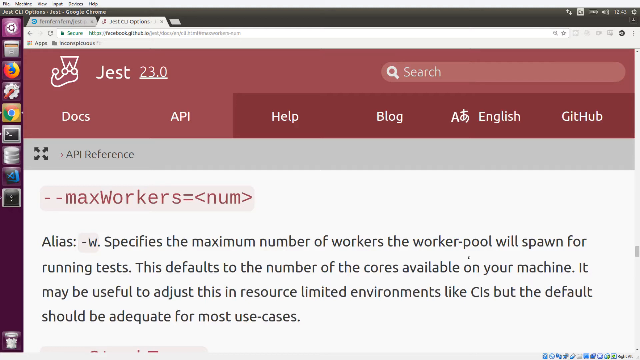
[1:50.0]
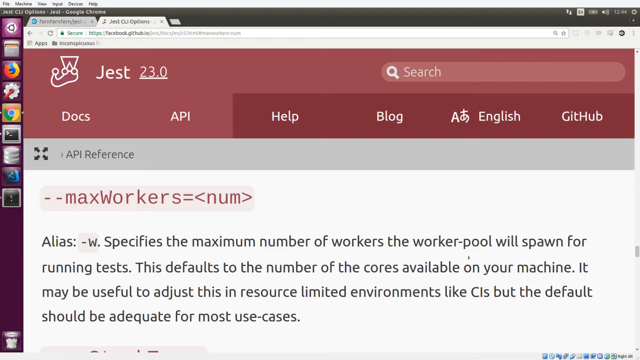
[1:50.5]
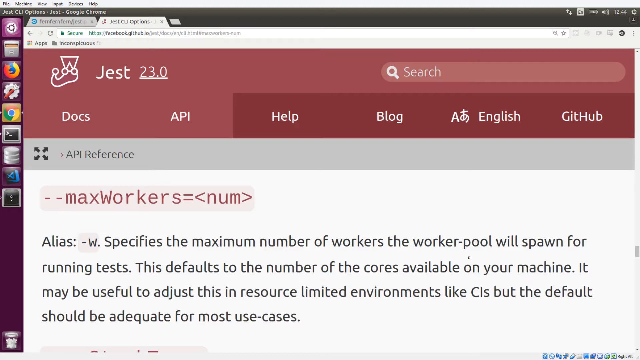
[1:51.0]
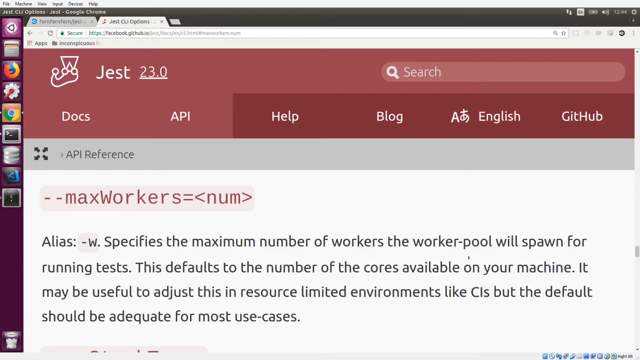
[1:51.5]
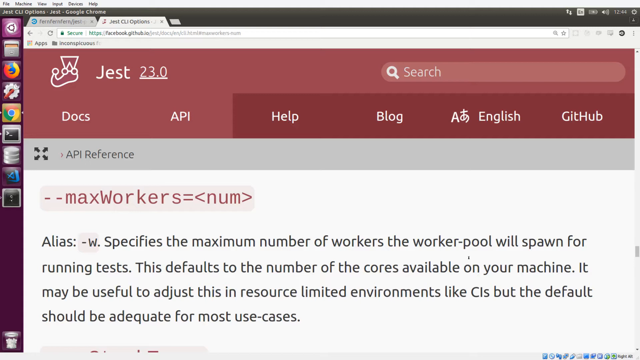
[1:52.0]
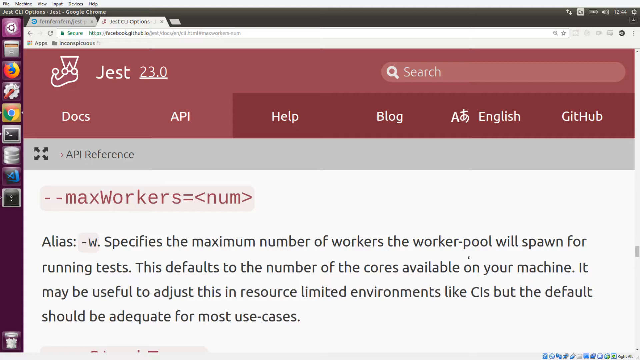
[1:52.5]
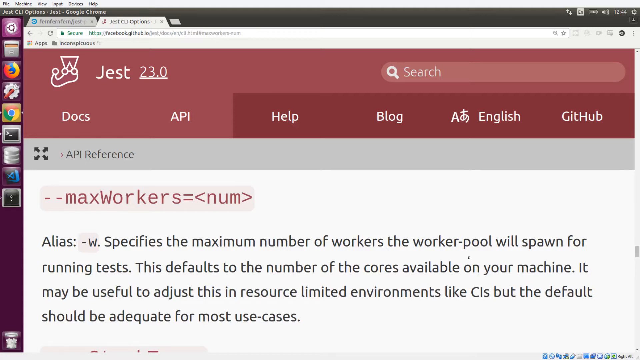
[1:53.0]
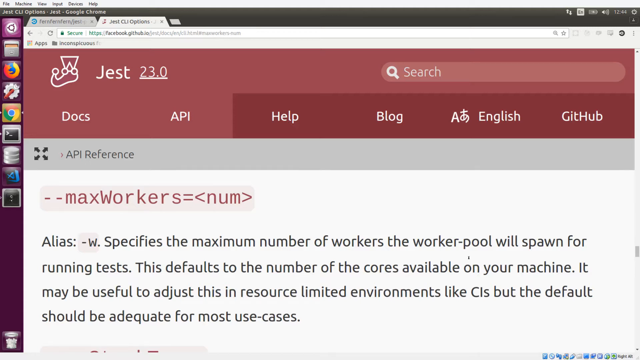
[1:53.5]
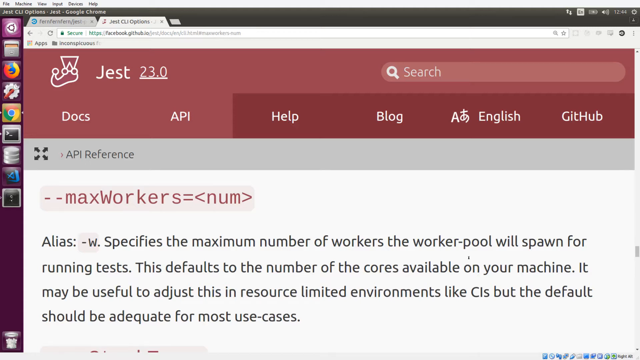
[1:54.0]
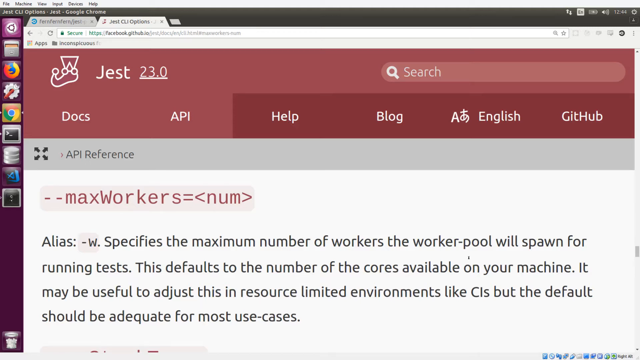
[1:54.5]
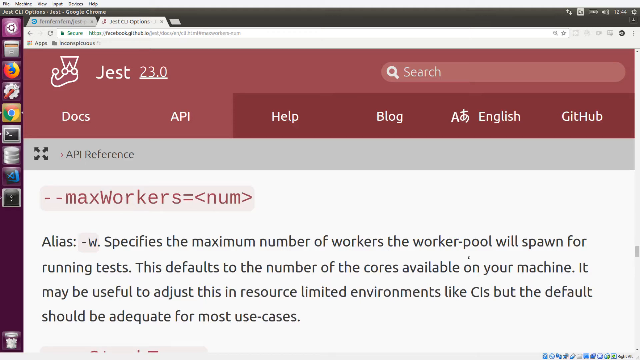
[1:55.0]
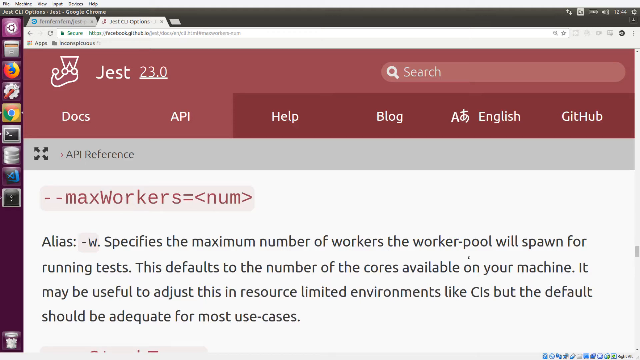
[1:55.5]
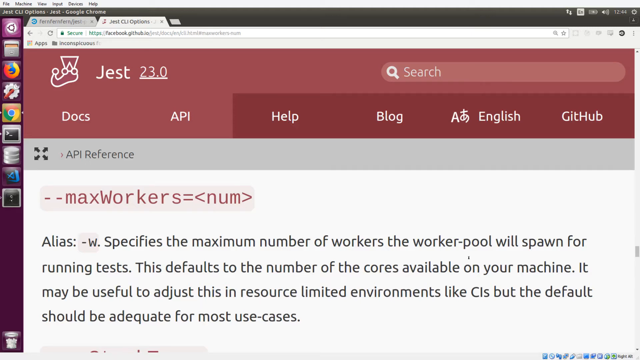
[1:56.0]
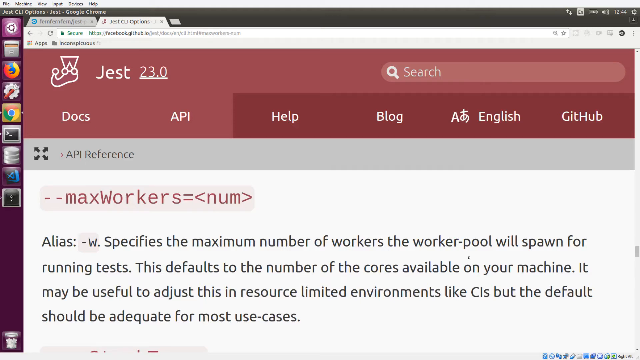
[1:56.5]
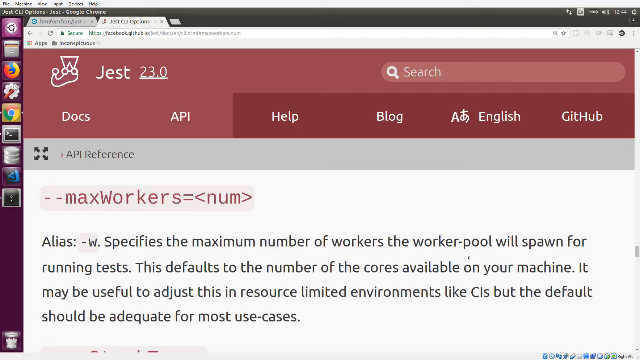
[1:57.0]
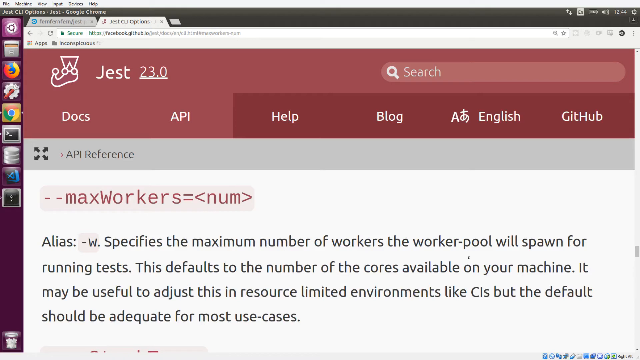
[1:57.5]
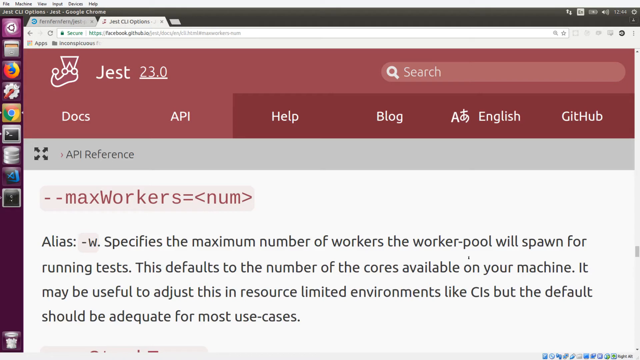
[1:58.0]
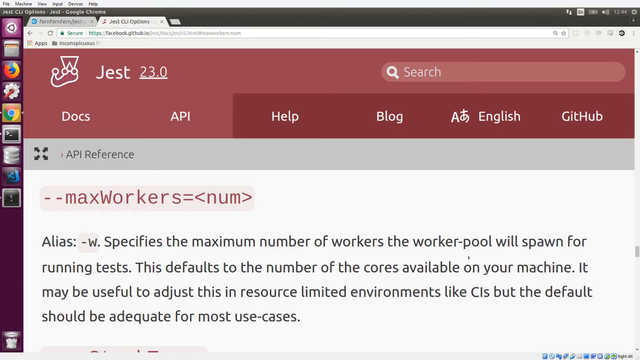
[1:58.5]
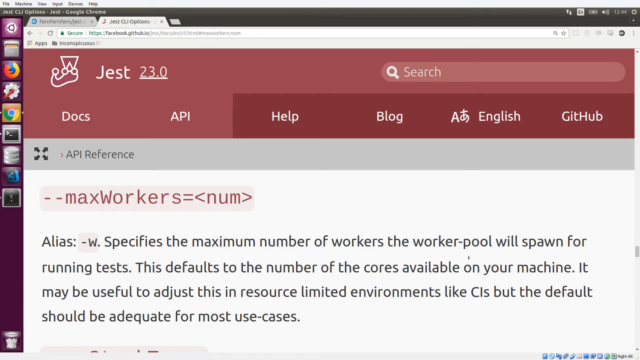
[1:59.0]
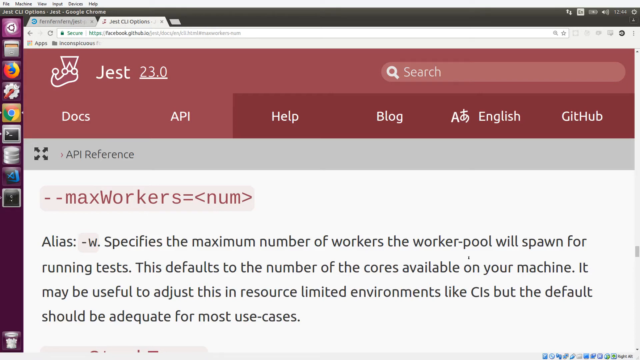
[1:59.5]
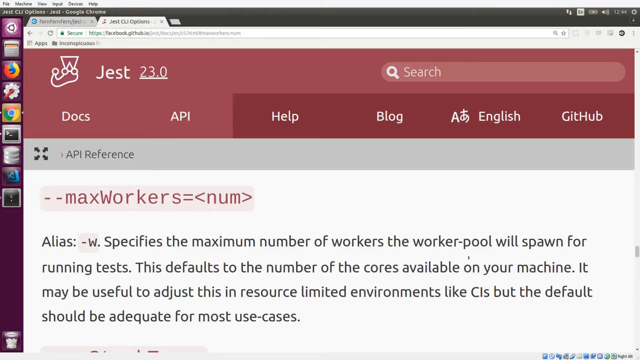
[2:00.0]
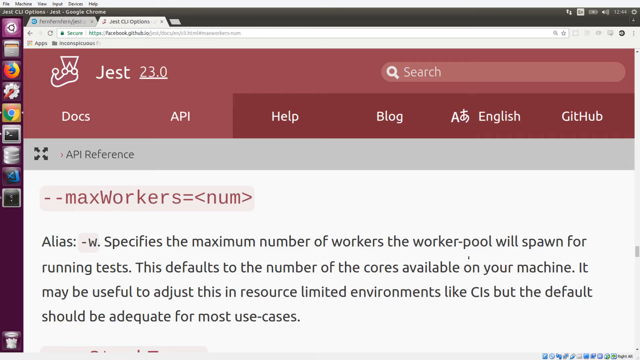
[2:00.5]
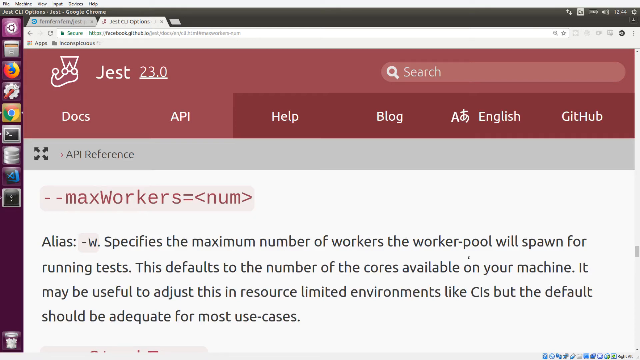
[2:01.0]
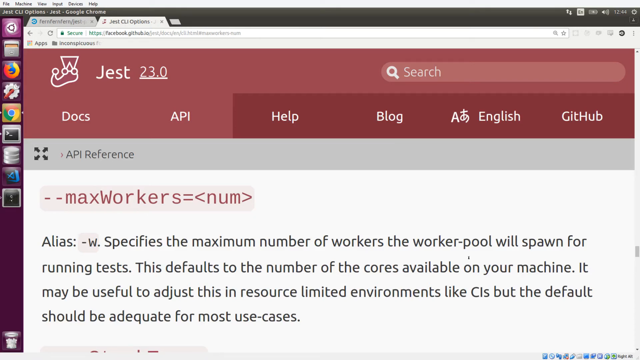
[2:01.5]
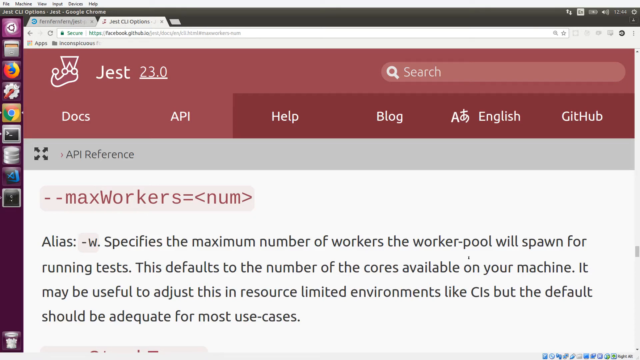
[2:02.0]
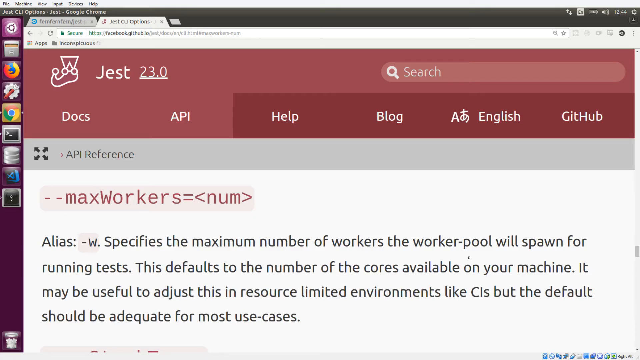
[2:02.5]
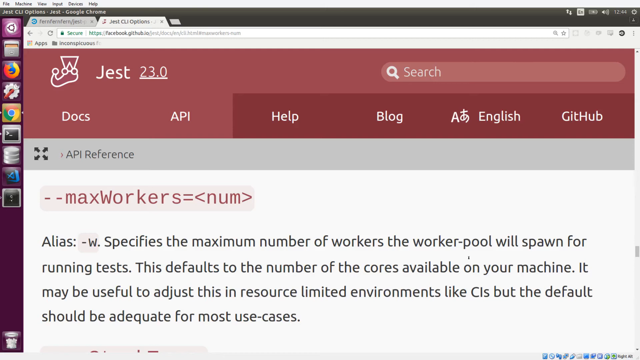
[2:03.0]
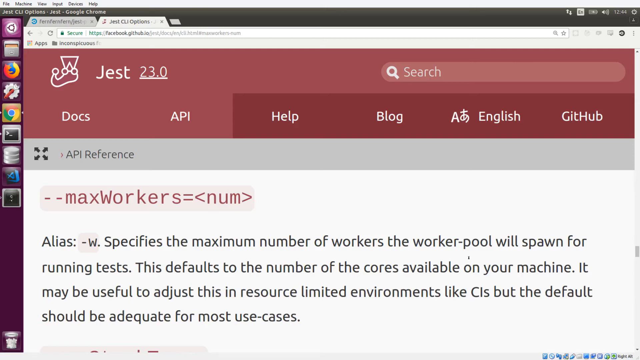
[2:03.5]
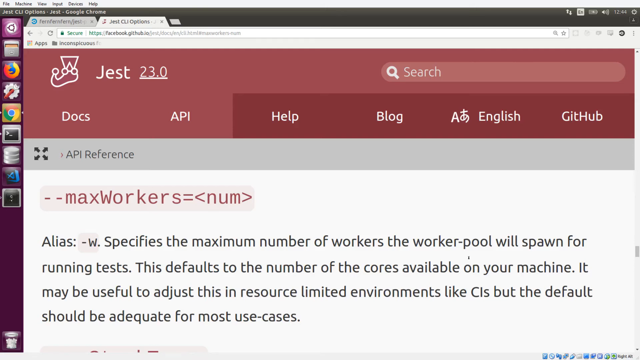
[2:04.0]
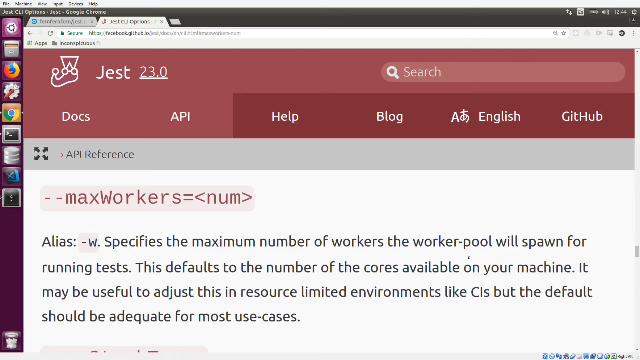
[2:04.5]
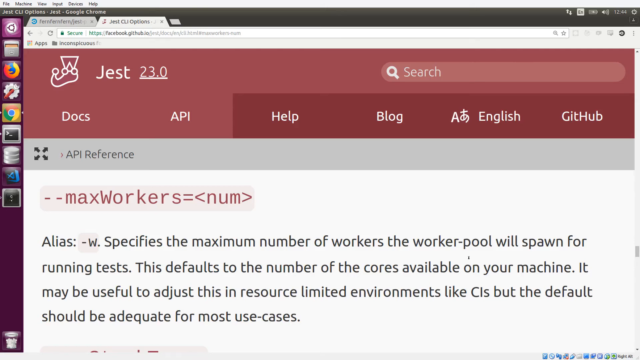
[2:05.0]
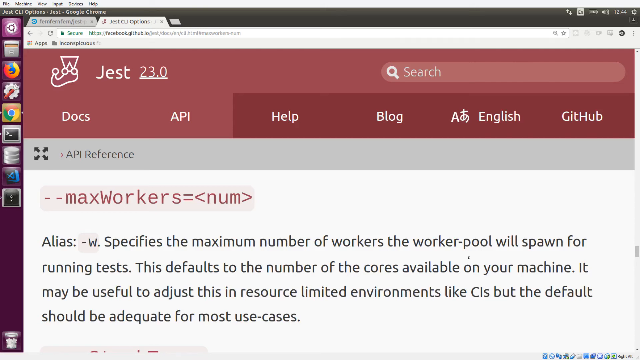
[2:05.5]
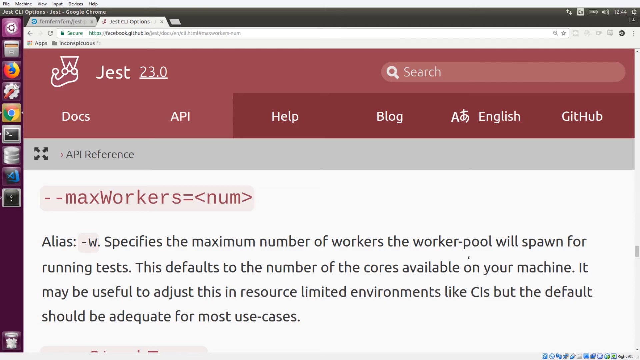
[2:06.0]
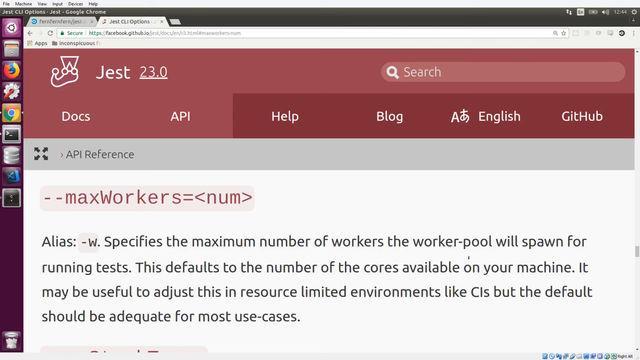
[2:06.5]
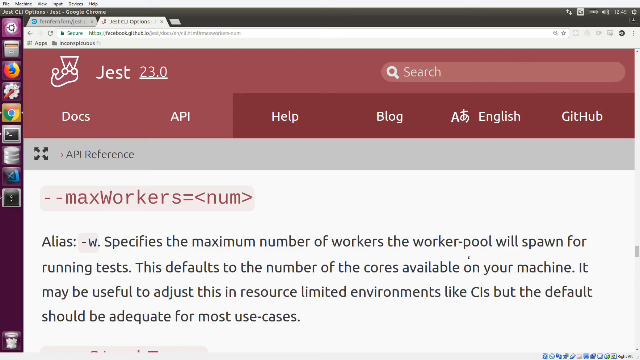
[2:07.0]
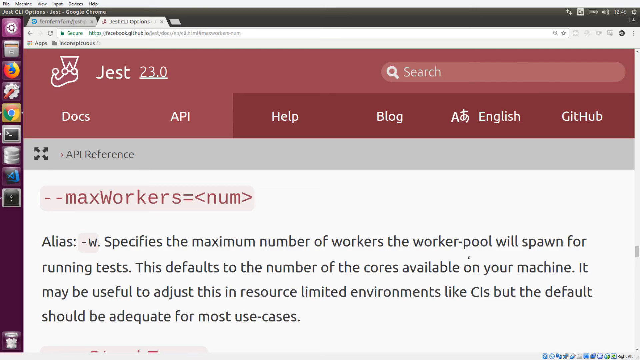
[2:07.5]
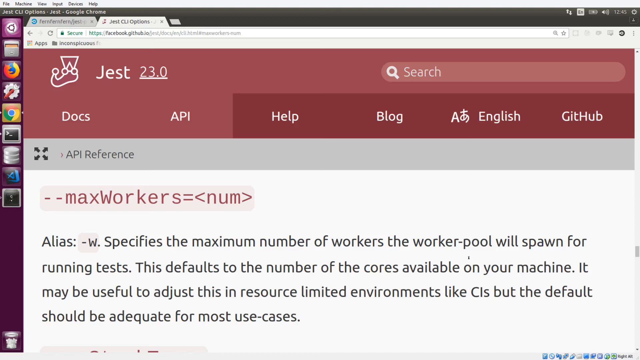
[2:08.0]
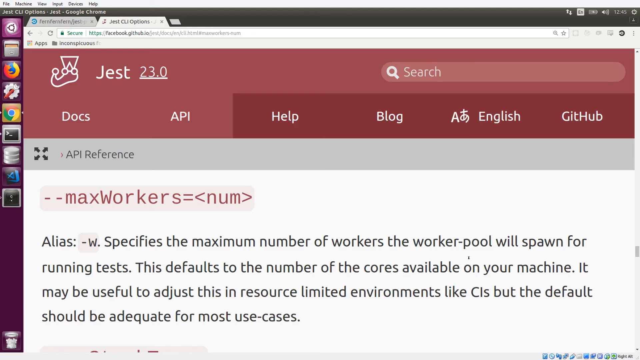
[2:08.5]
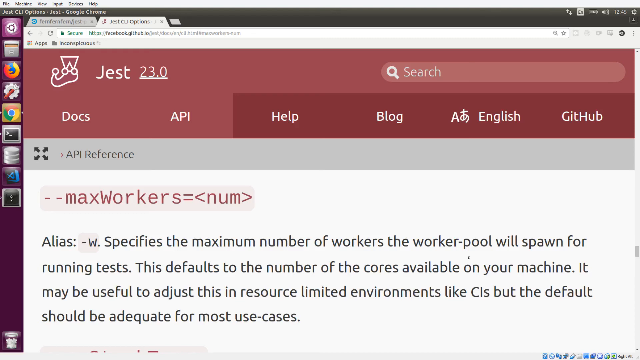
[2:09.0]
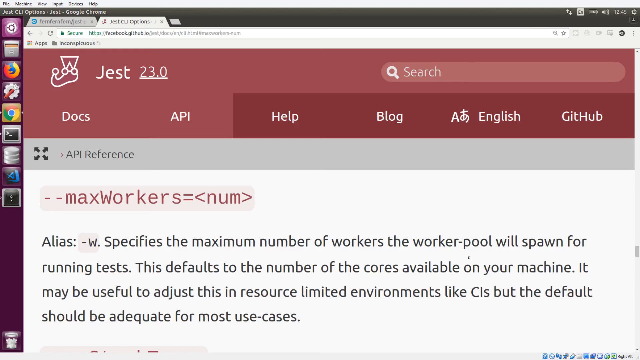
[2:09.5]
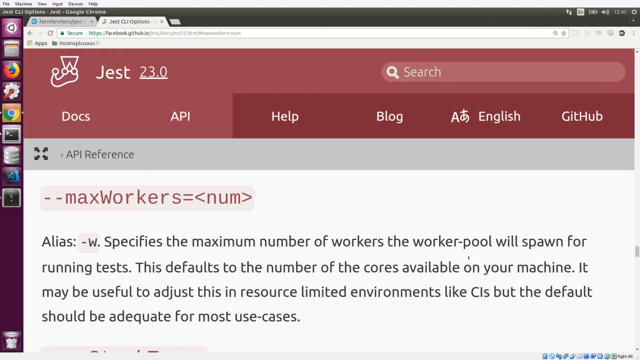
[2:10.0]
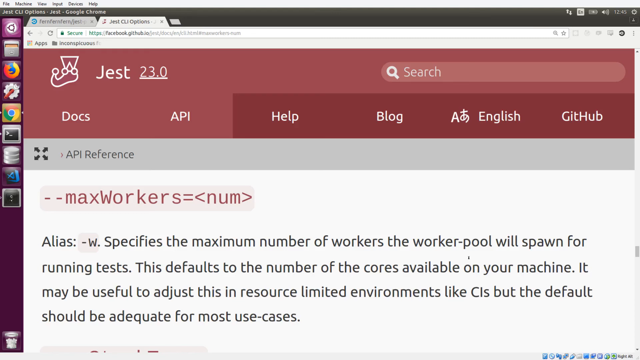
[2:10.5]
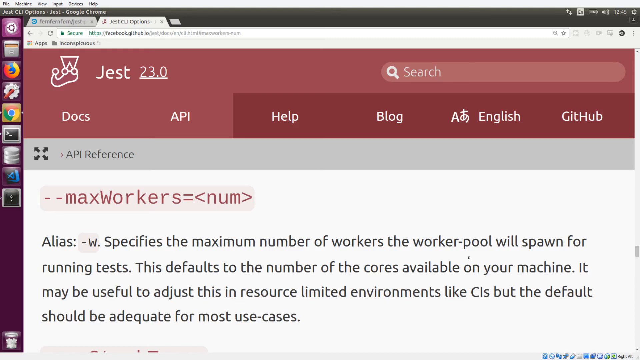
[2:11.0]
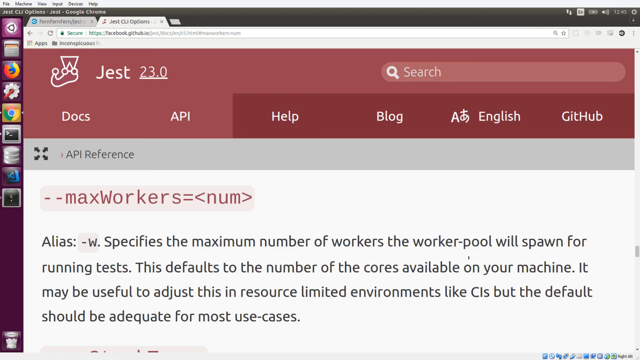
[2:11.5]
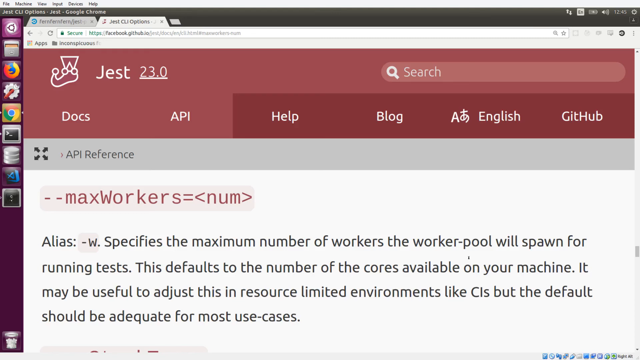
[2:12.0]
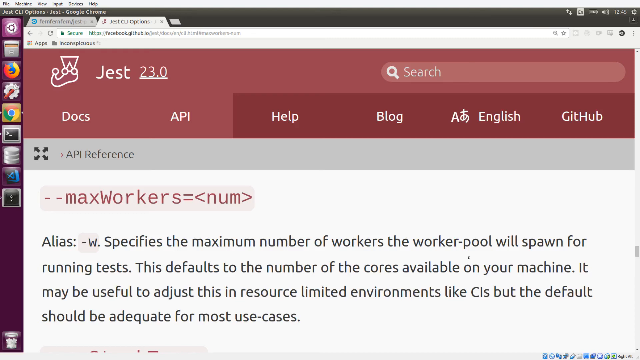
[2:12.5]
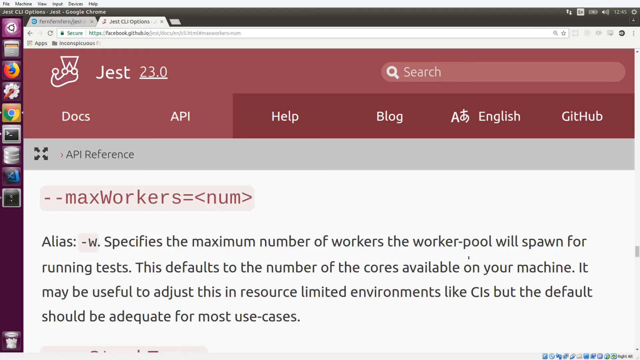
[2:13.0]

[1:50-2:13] The video stays on the same page, which continues to show the tags or headers to use and how to format and lay out the parameters, apparently for making a web page. It may also show speeds.